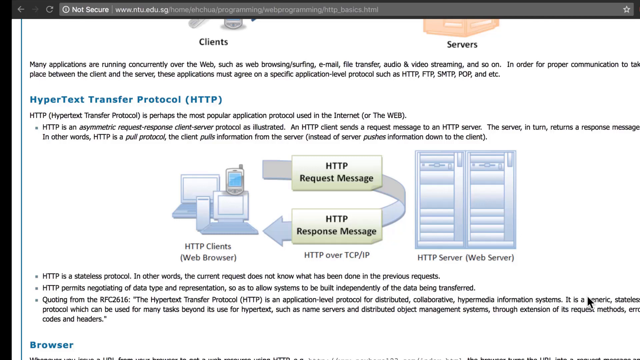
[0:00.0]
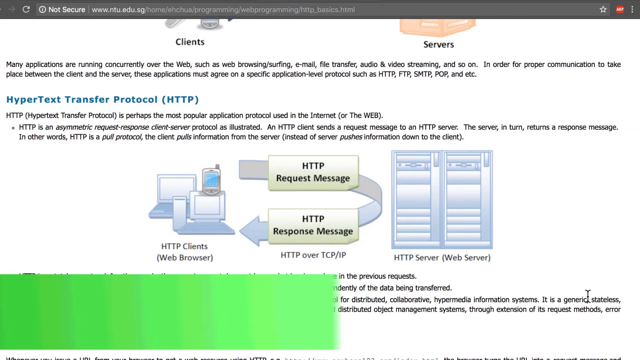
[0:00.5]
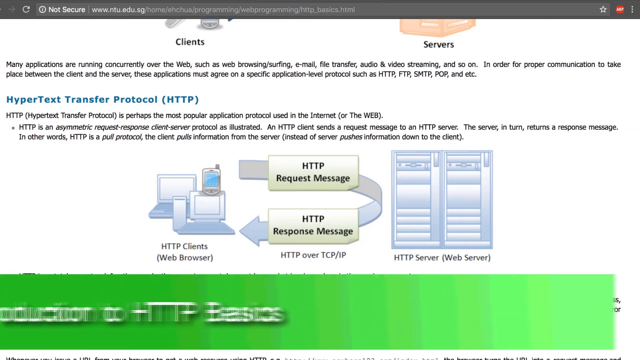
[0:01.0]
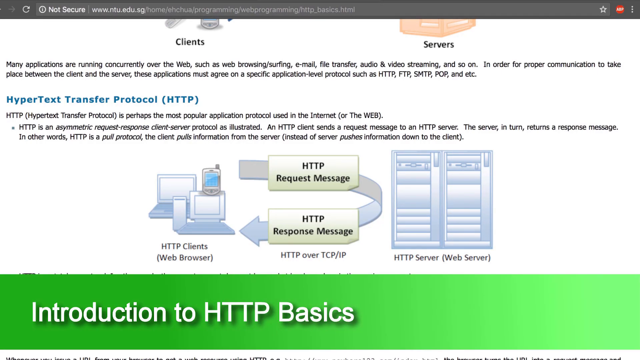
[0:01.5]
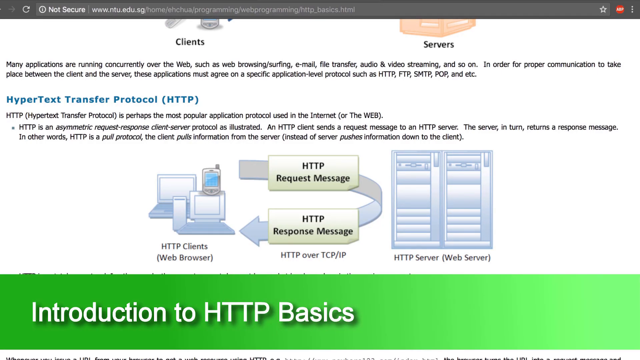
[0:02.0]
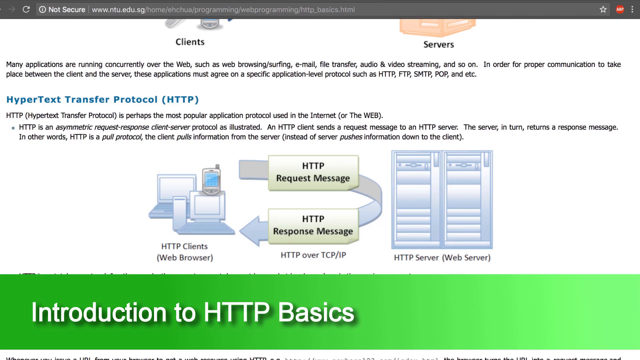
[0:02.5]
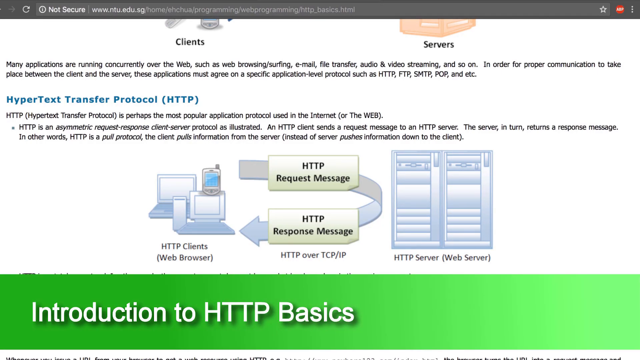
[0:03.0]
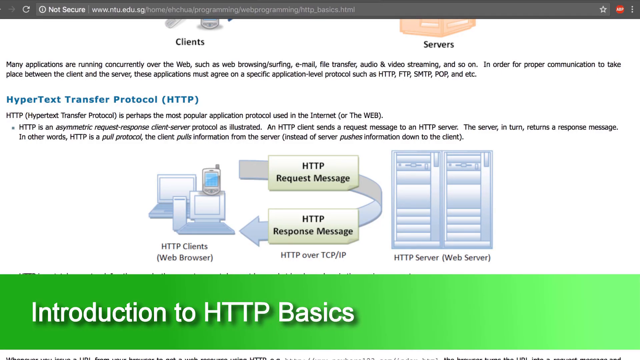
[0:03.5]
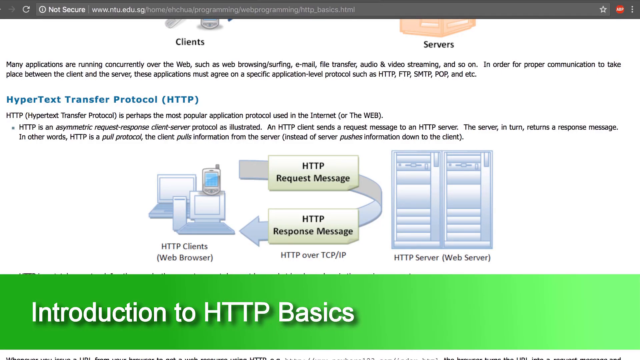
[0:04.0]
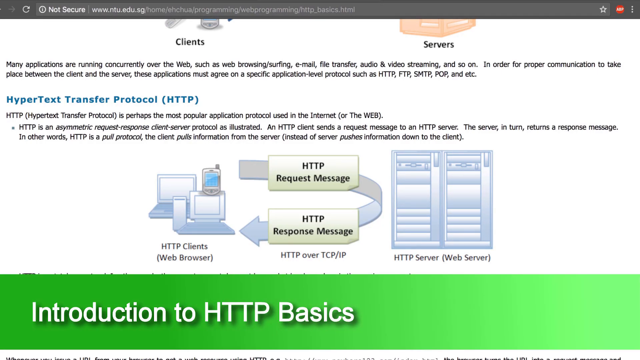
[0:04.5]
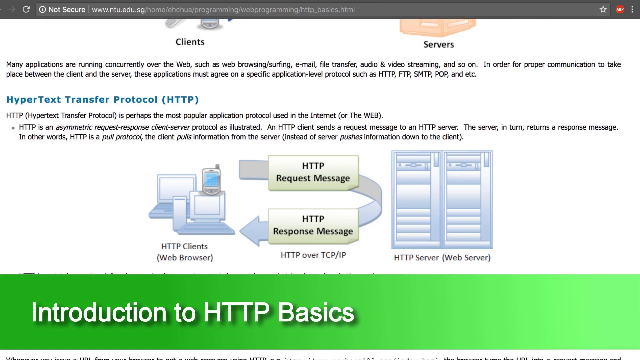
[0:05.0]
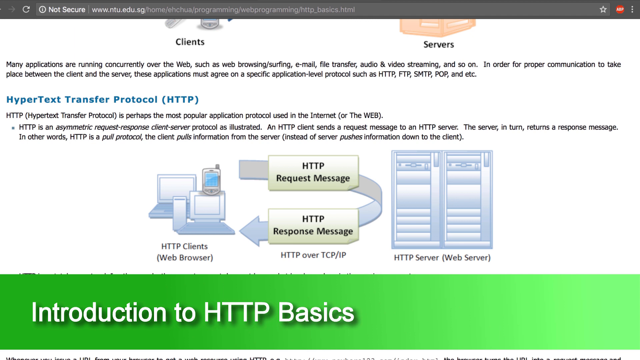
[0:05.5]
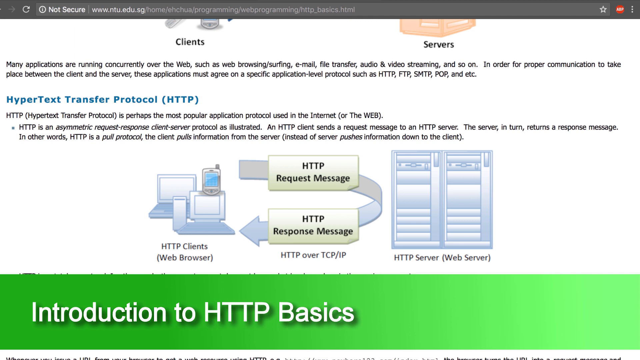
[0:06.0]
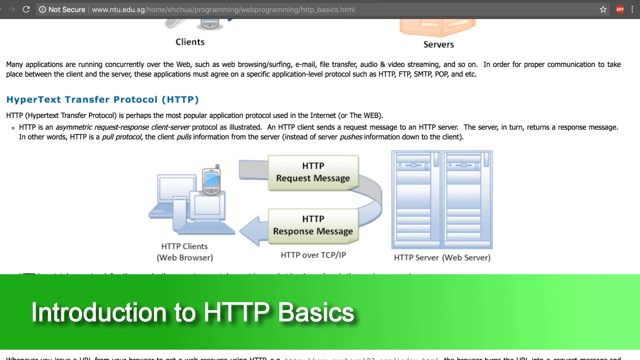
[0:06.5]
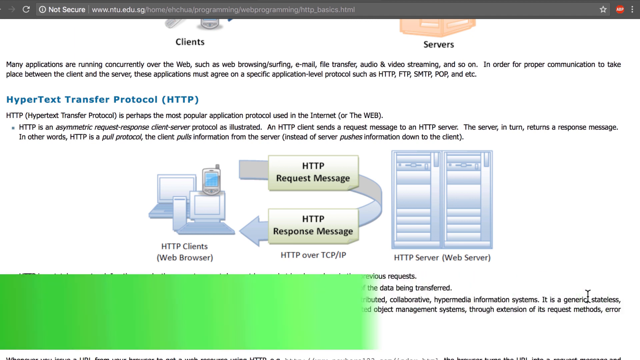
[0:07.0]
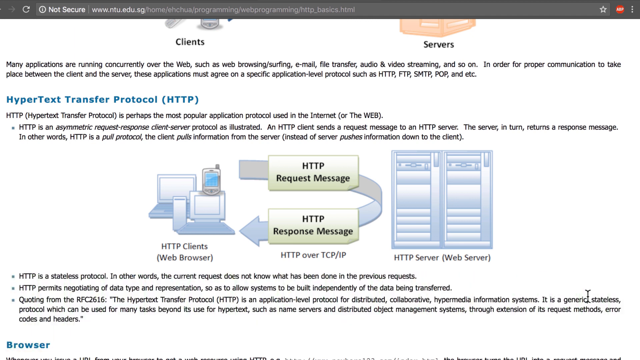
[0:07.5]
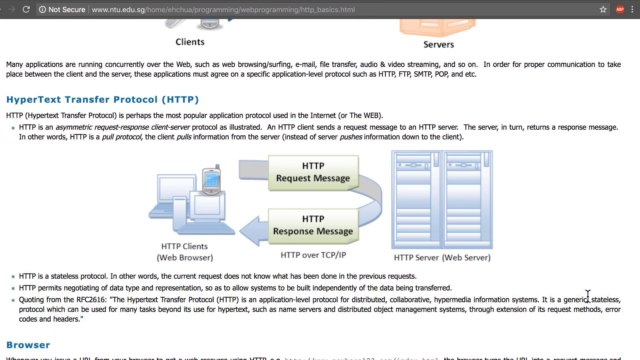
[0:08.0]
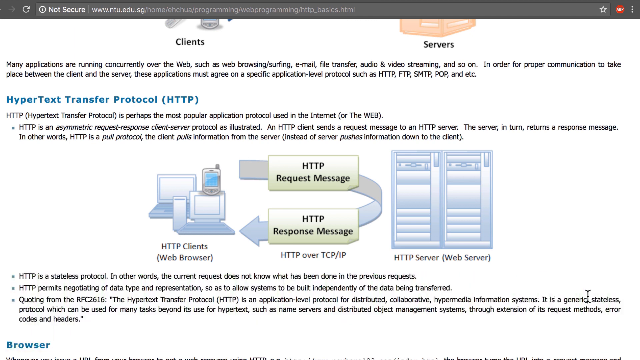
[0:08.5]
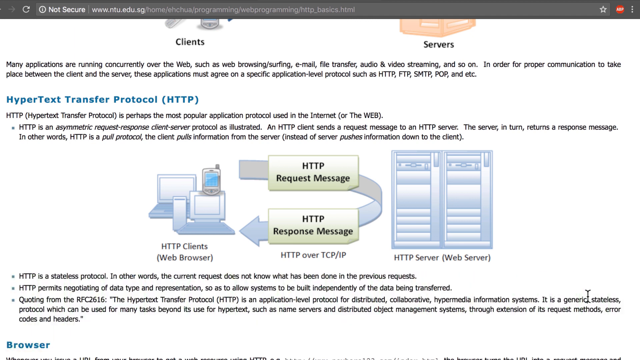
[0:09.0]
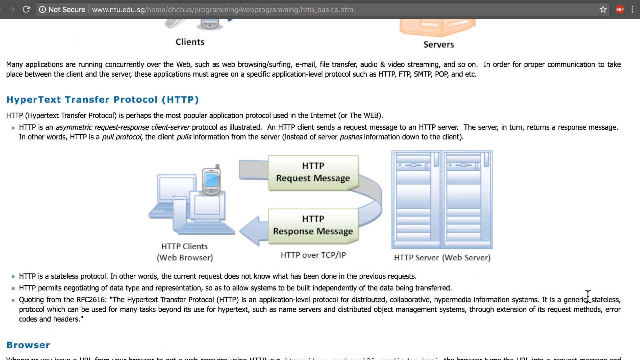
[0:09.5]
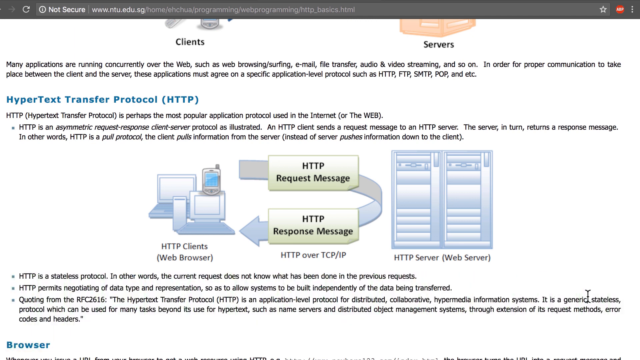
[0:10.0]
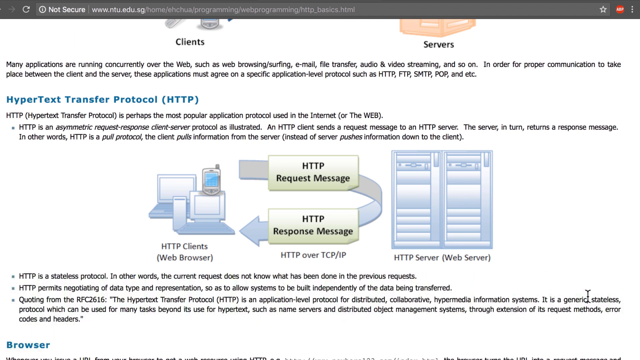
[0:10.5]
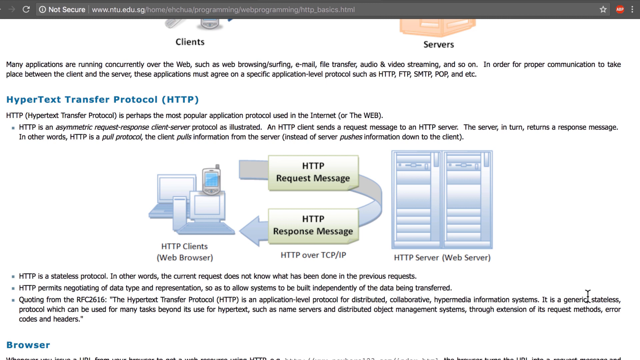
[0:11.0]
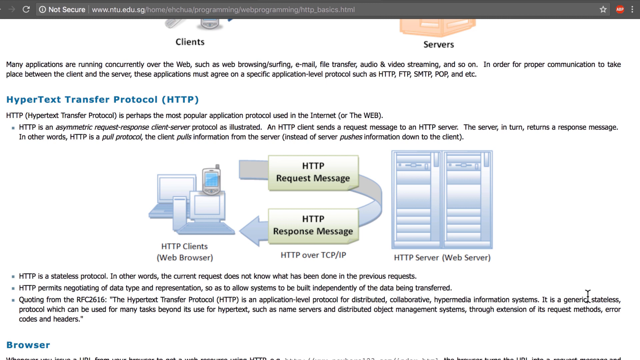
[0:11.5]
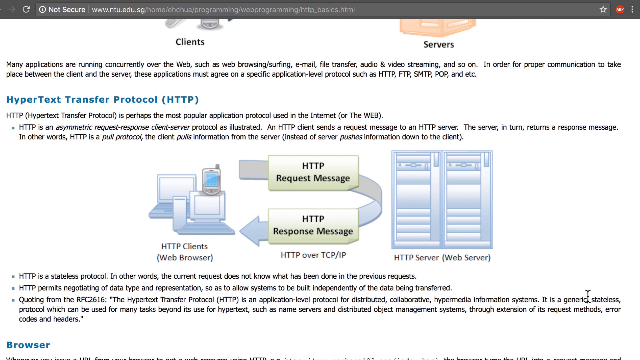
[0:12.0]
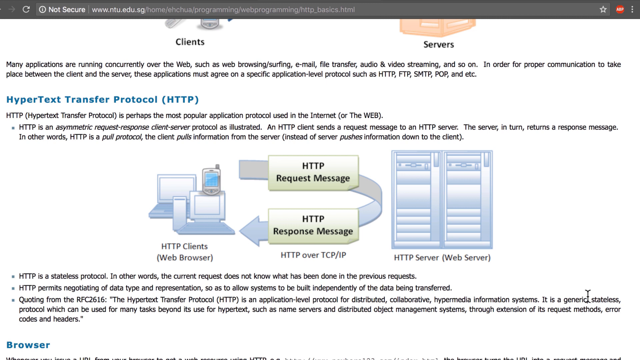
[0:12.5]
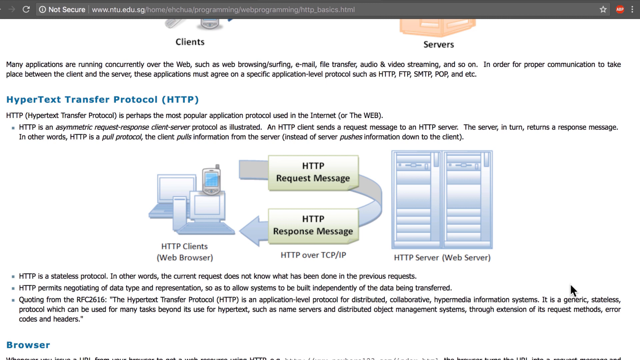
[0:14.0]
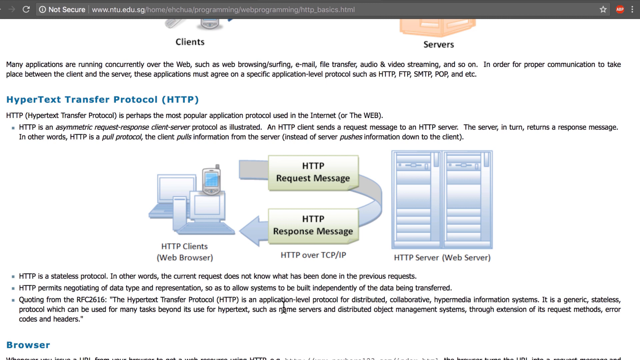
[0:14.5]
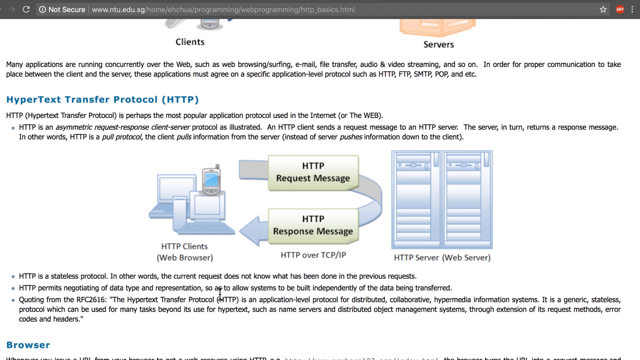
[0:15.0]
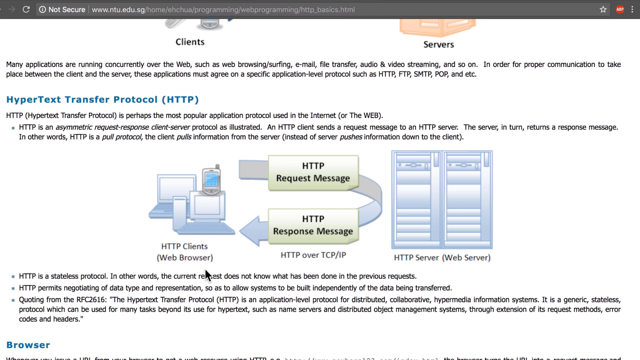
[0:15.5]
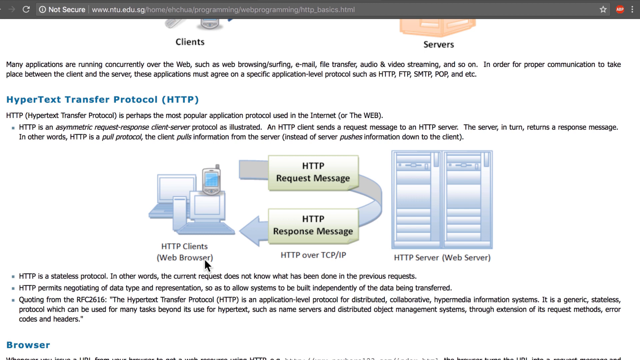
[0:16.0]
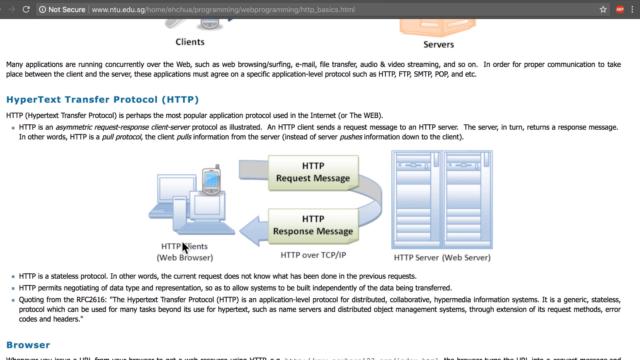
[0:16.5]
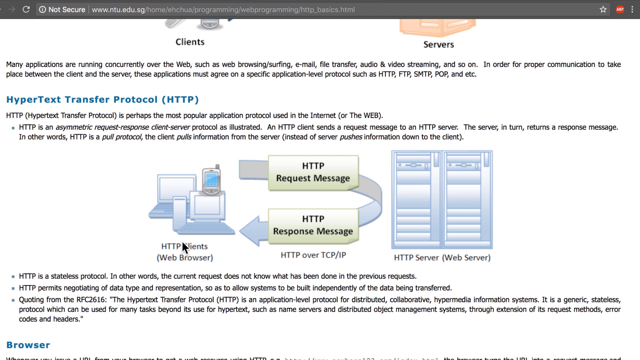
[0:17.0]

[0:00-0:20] A page has "clients and servers" at the top. Text reads "many applications are running concurrently over the web, such as web browsing, surfing, email," and continues with further items including video streaming, followed by "Hypertext Transfer Protocol, HTTP, is perhaps the most popular application." The page goes on to show how HTTP messages and requests are sent between the server and the client in a simple diagram. A solid green banner across the bottom reads "introduction to HTTP basics." The mouse cursor moves around over the HTTP client browser.